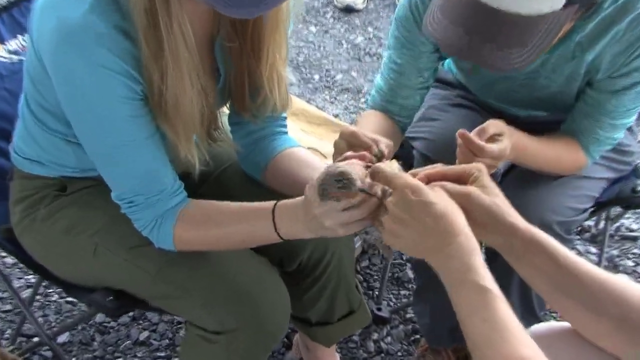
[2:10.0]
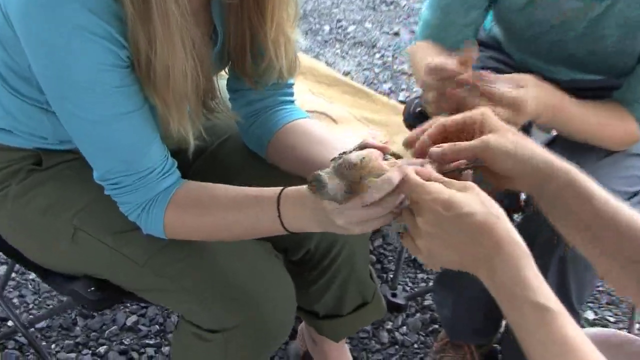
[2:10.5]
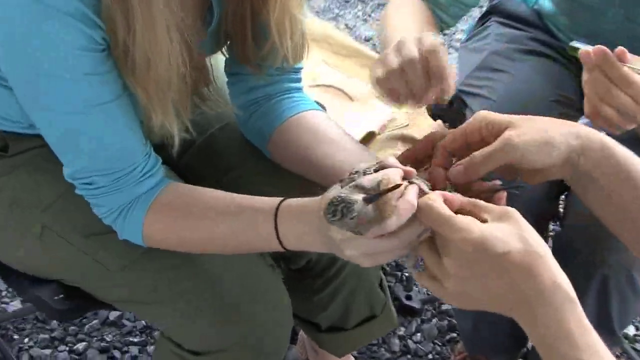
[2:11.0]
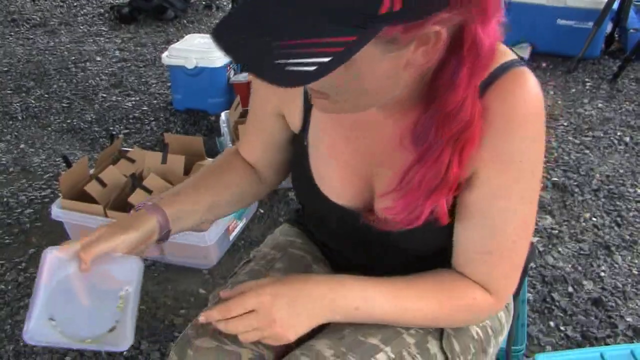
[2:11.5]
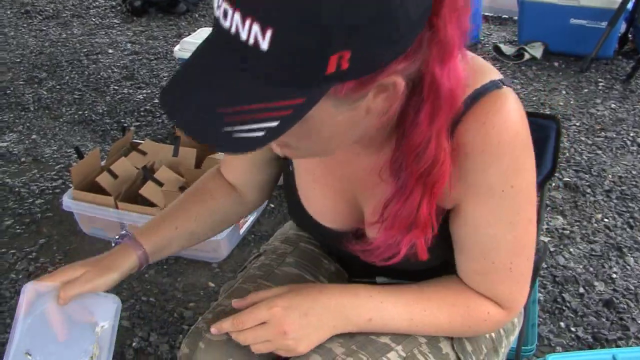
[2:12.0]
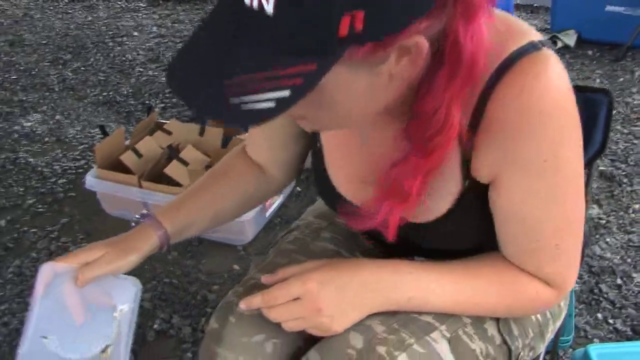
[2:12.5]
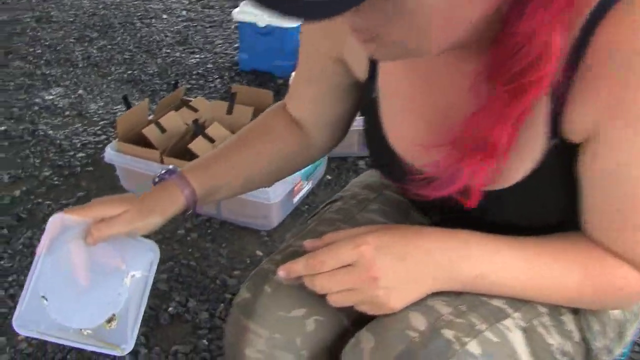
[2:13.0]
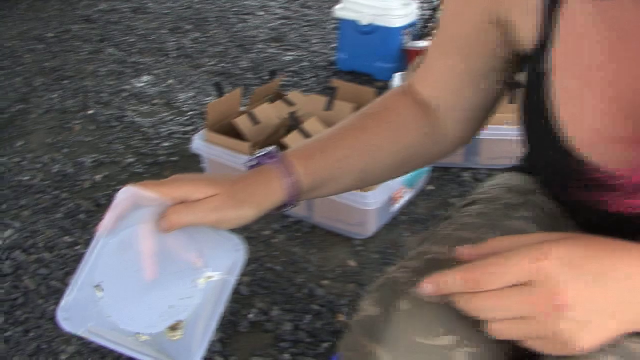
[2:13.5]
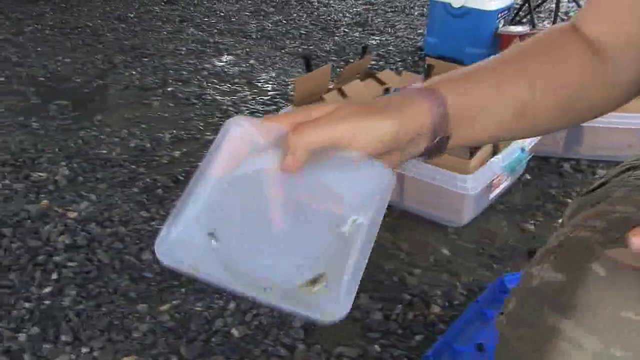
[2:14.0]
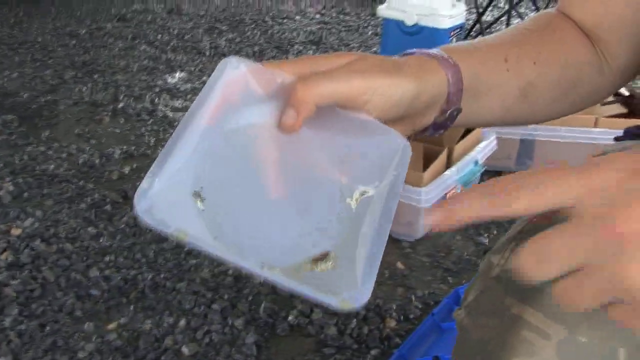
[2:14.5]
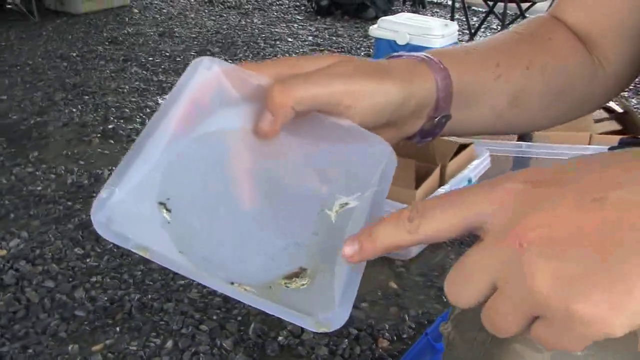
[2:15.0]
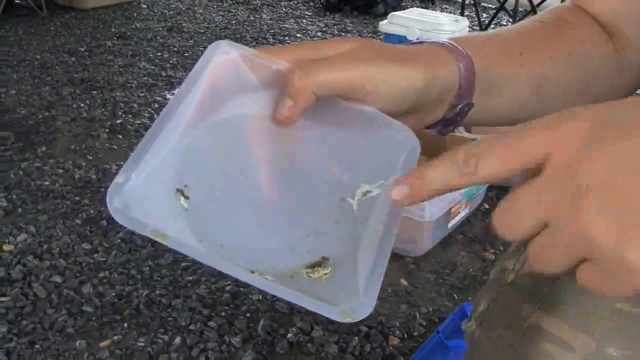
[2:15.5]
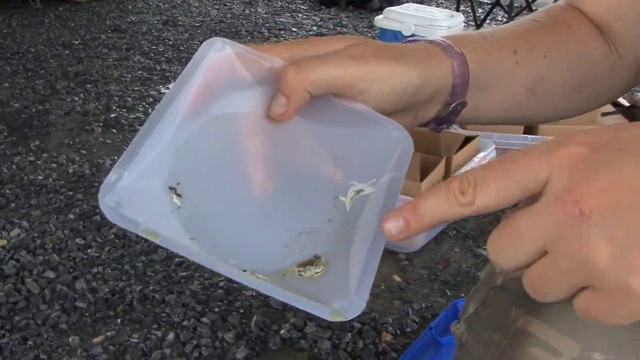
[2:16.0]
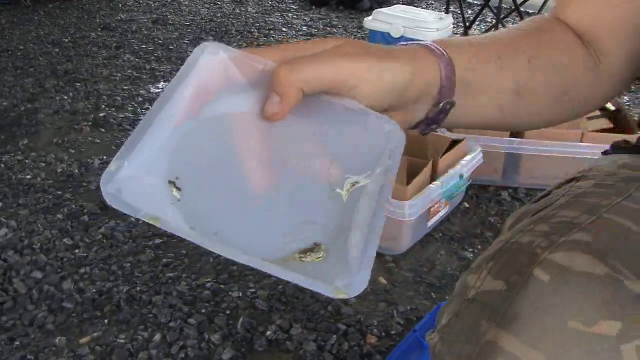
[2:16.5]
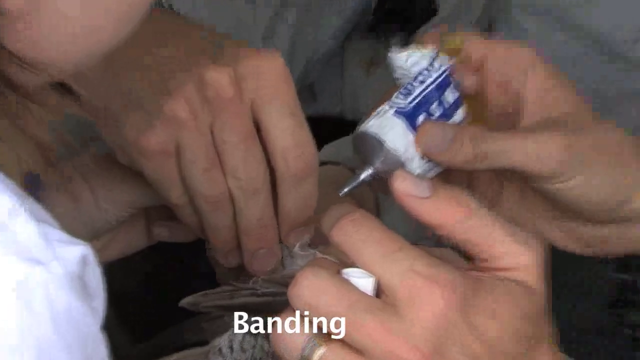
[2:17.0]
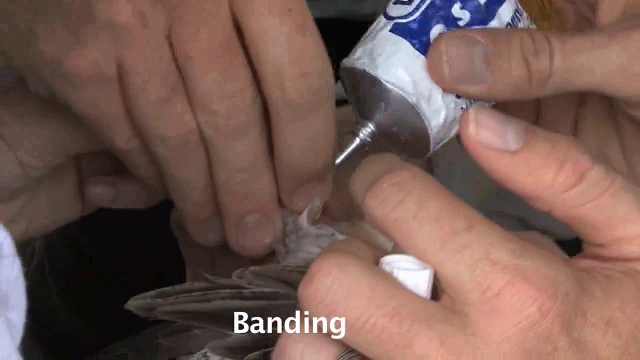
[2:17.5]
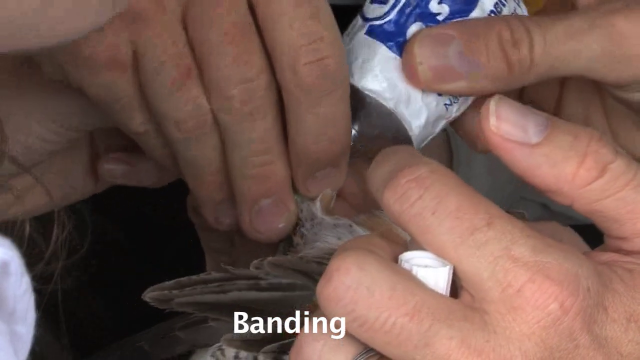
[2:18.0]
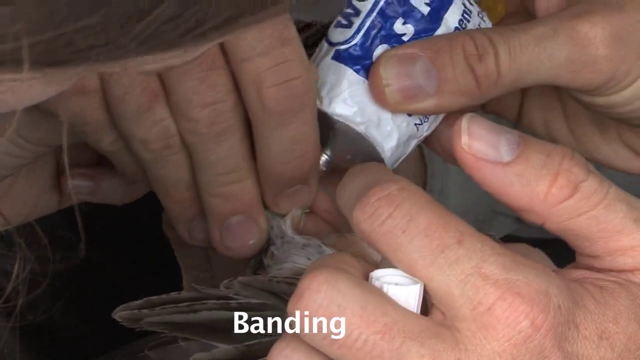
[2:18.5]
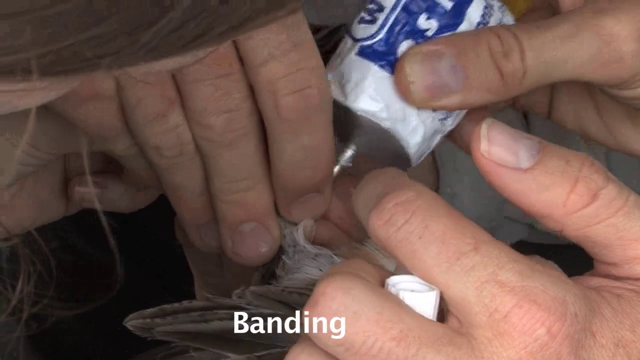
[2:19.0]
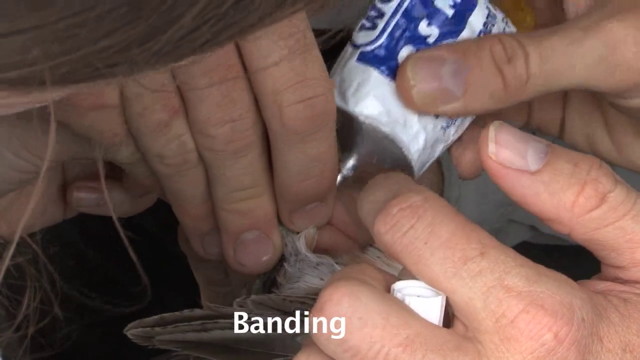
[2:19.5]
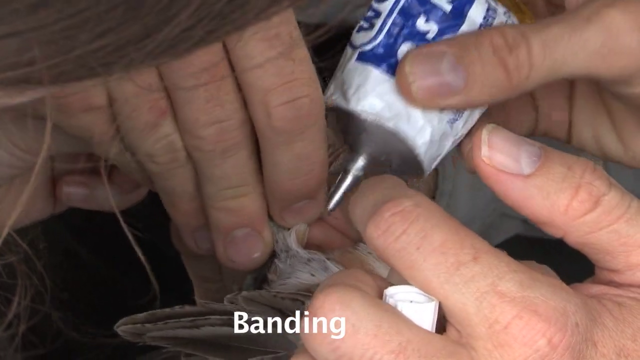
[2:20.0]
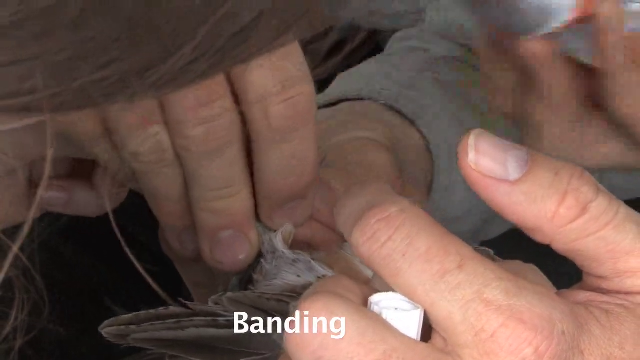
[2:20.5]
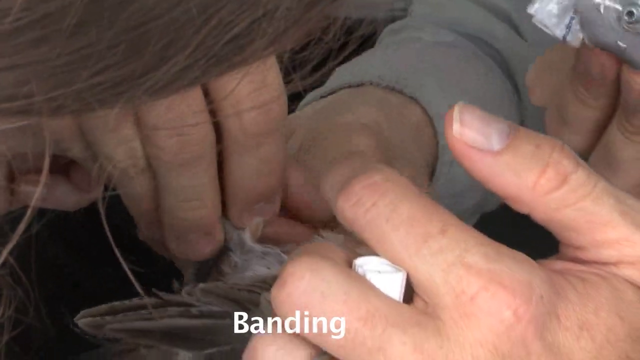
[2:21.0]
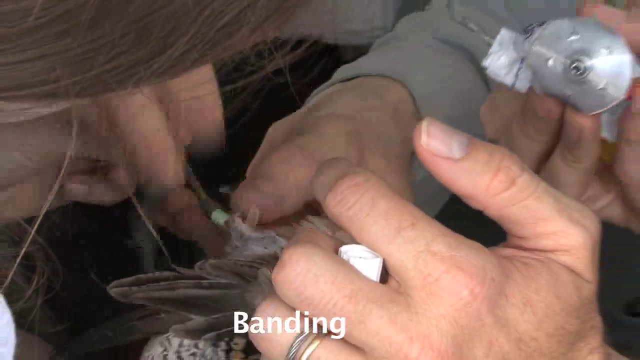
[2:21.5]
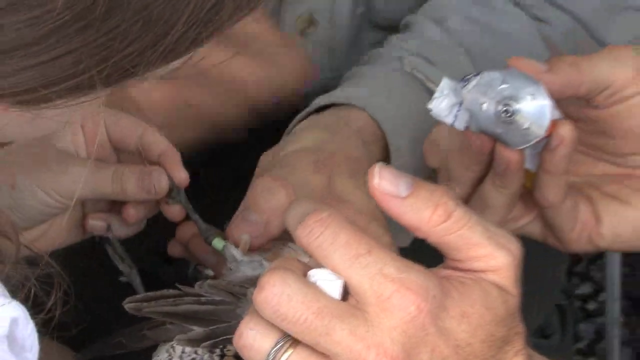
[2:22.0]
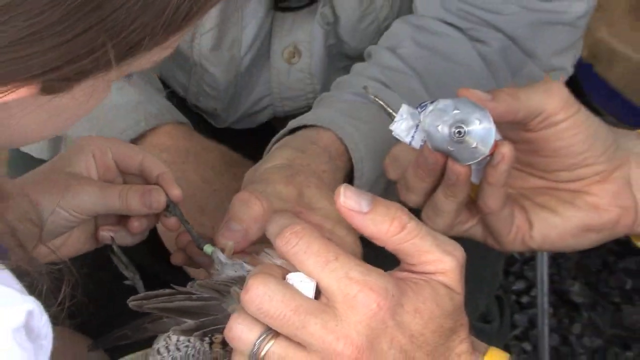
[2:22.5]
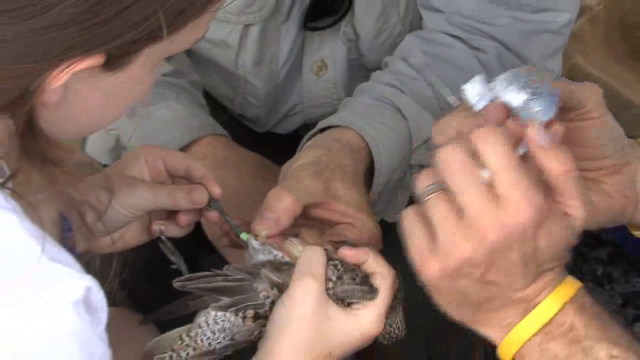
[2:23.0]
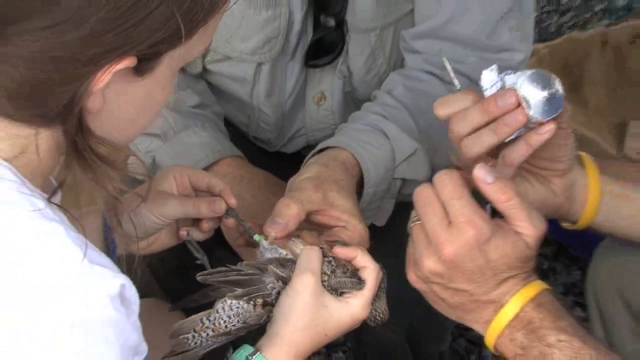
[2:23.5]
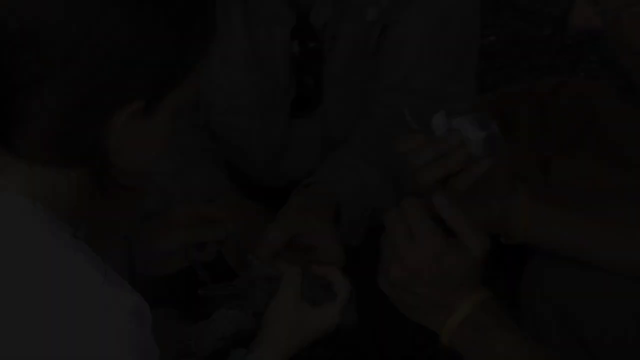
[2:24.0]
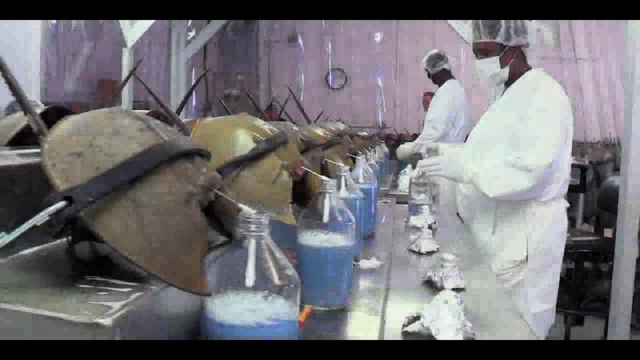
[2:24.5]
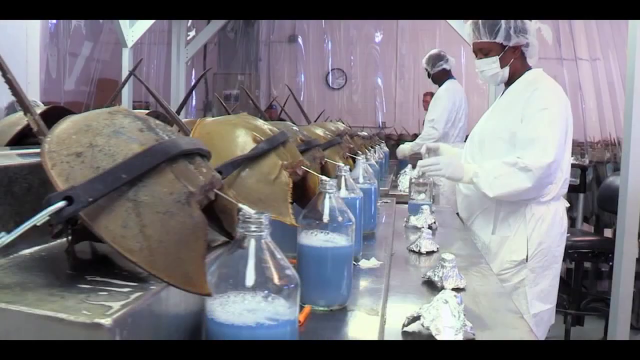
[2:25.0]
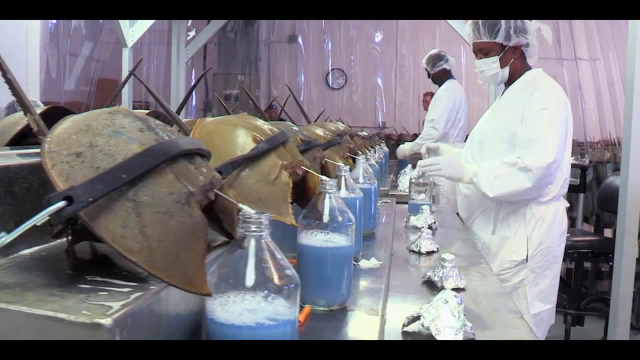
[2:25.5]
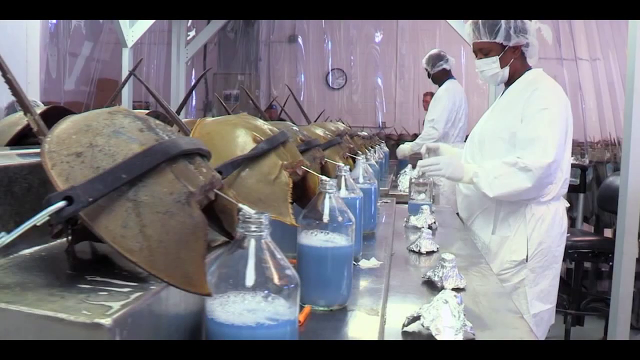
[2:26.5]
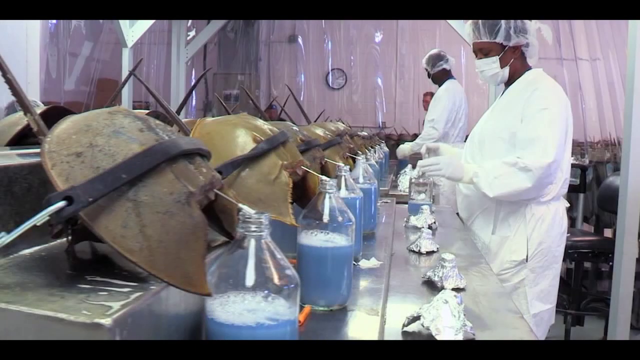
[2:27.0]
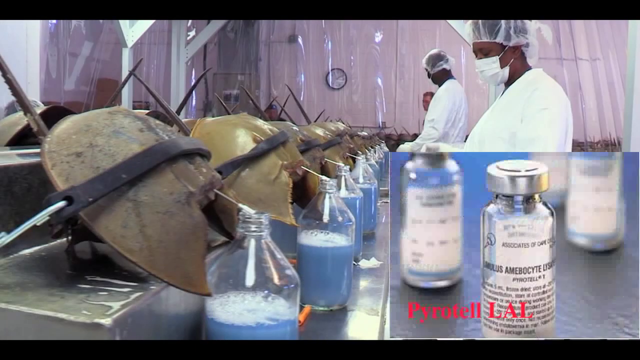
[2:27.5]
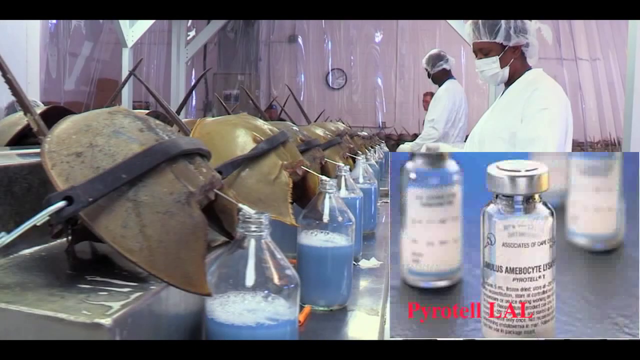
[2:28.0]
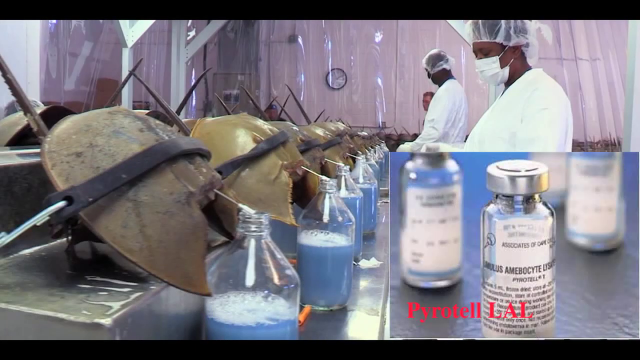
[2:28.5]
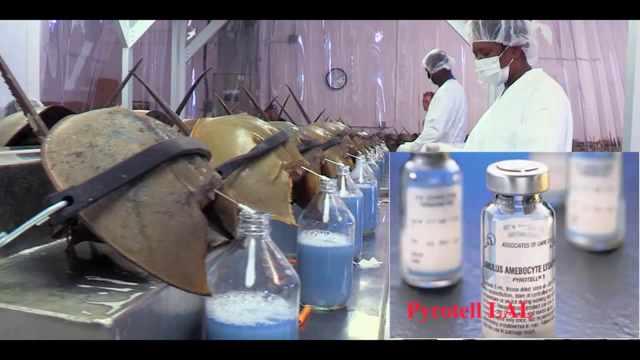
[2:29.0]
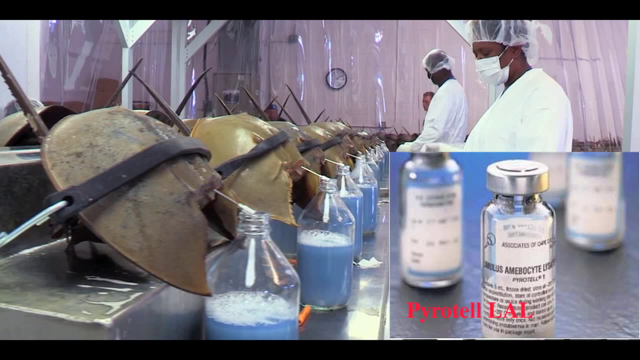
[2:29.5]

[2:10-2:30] Three volunteers take care of a juvenile red knot bird, holding it in their hands. An adult woman with a pink ponytail shows the camera a plate with some markings on it, possibly food or waste from the bird, and points at it. Next, a banding procedure is shown: glue is applied to the bird's legs and a band is applied. The video then shows a horseshoe crab factory where blue liquid is extracted from the animals, with a photo insert in the bottom right showing the liquid in glass bottles.